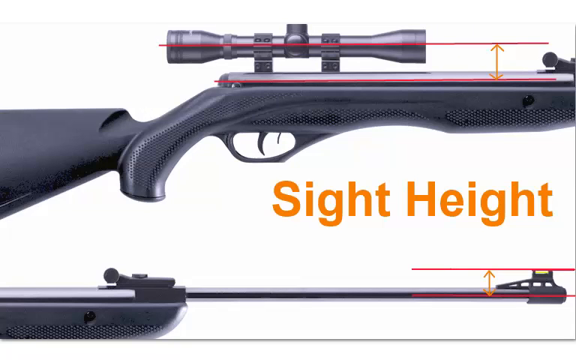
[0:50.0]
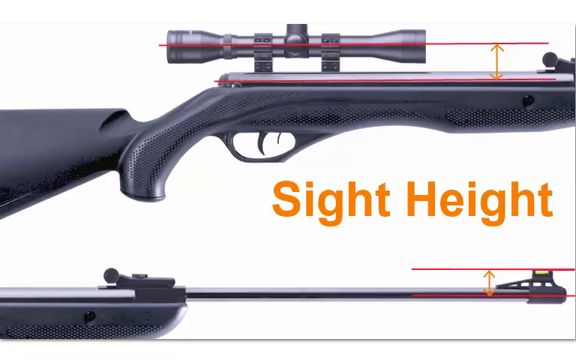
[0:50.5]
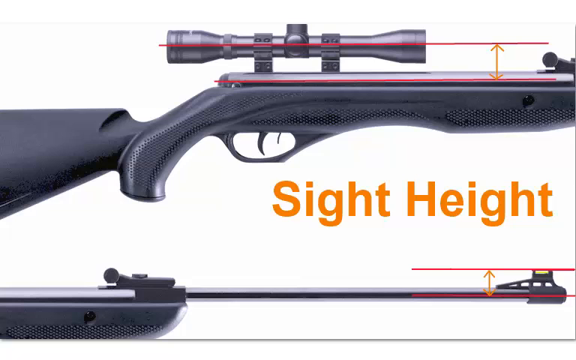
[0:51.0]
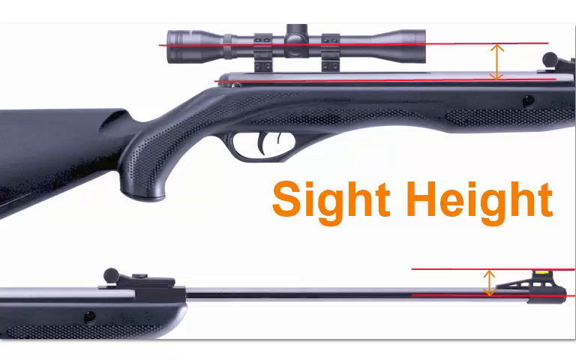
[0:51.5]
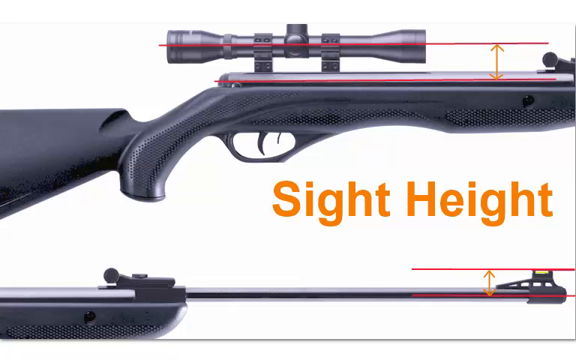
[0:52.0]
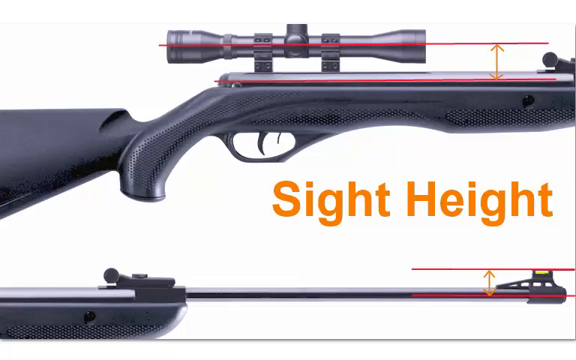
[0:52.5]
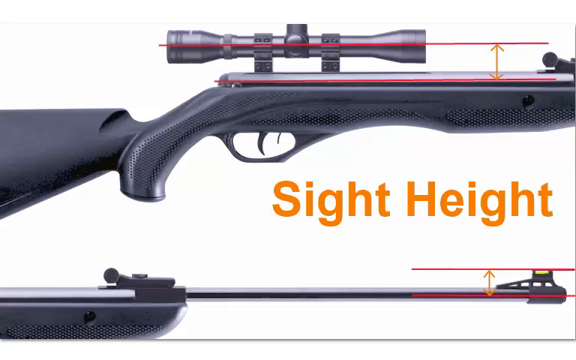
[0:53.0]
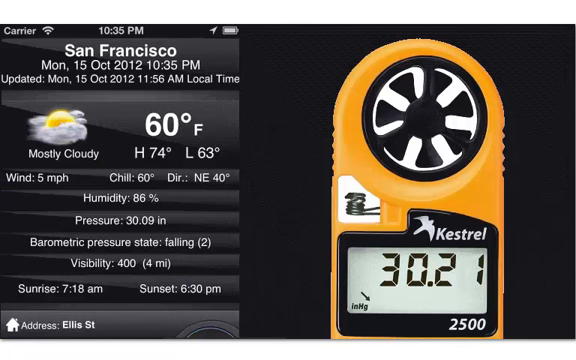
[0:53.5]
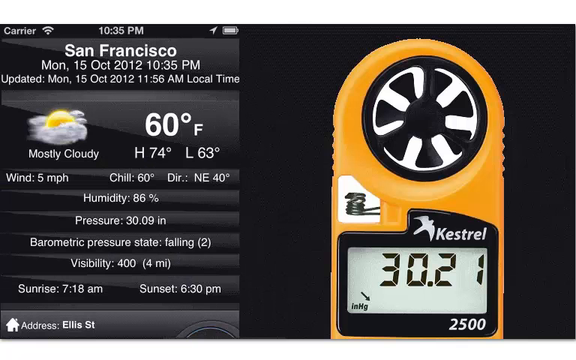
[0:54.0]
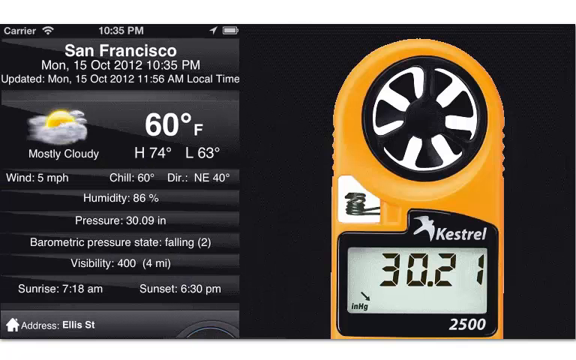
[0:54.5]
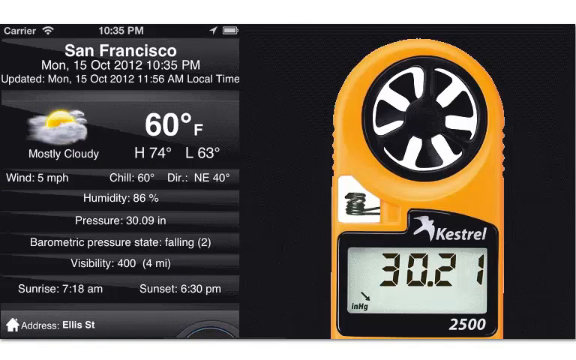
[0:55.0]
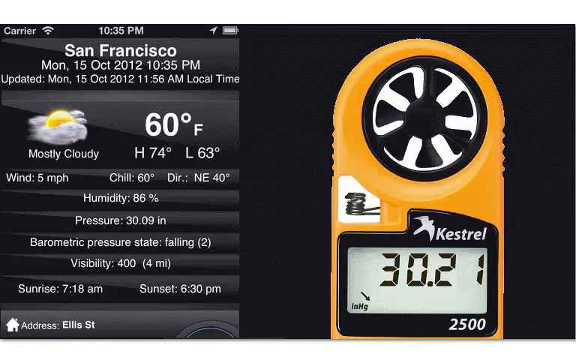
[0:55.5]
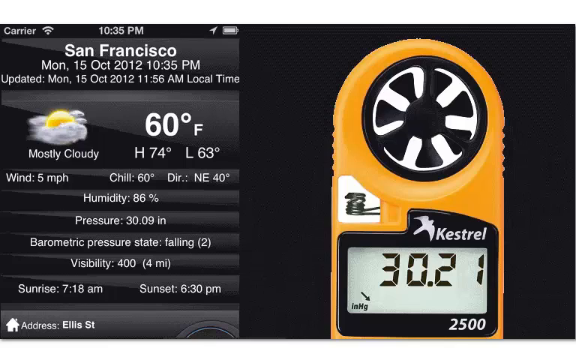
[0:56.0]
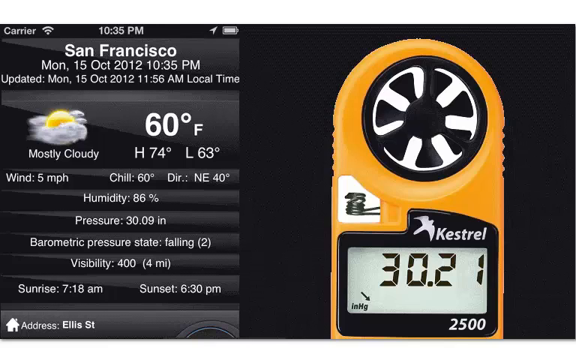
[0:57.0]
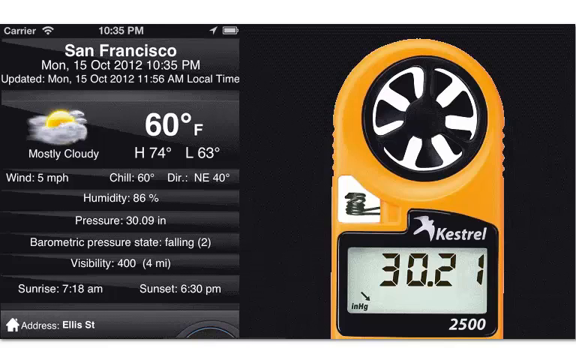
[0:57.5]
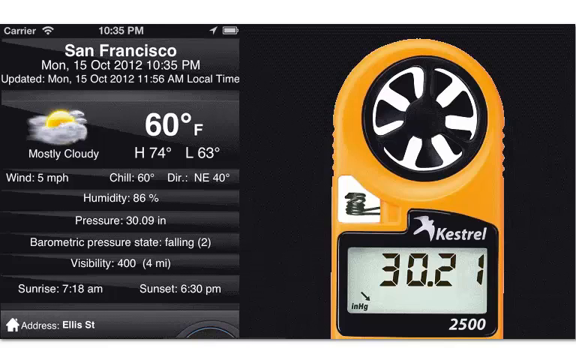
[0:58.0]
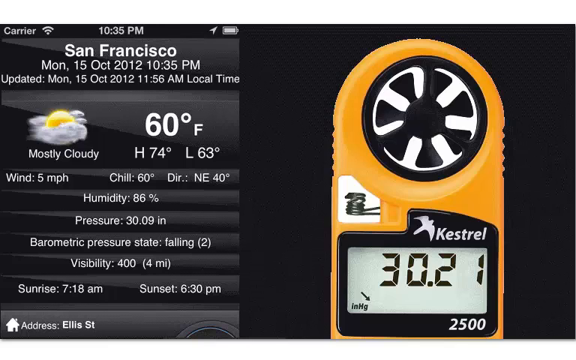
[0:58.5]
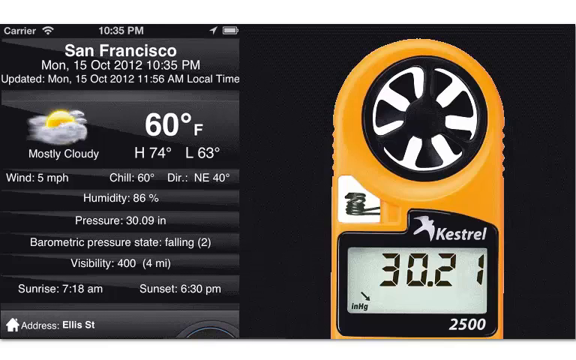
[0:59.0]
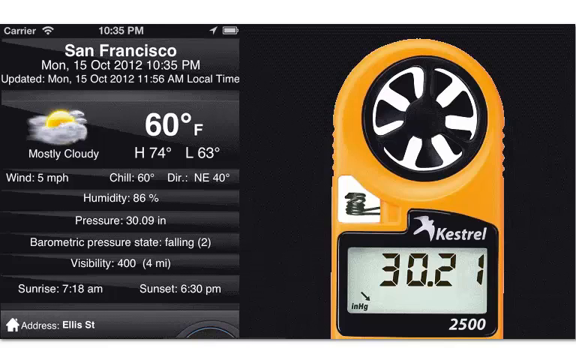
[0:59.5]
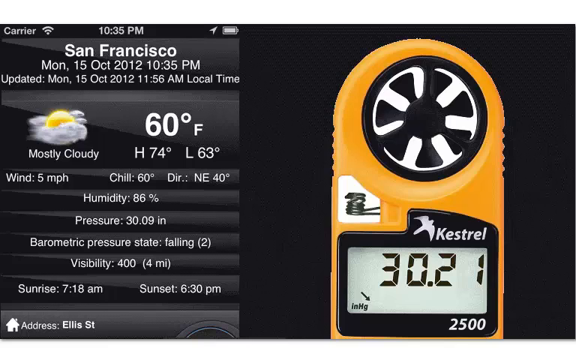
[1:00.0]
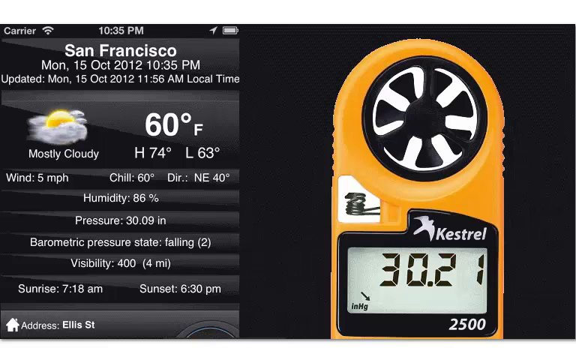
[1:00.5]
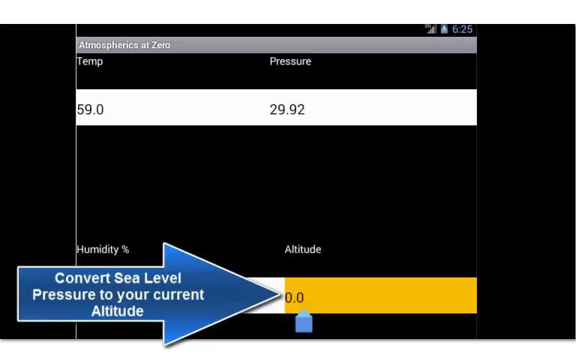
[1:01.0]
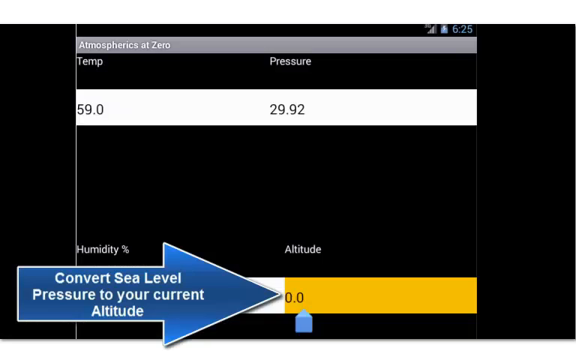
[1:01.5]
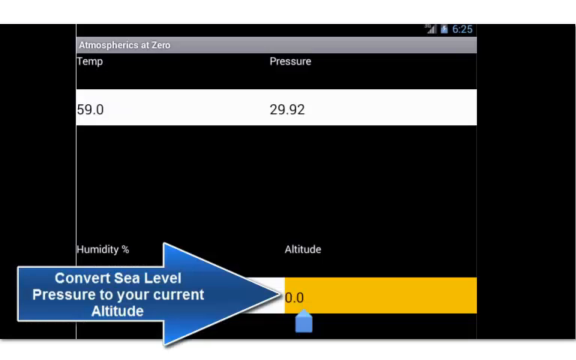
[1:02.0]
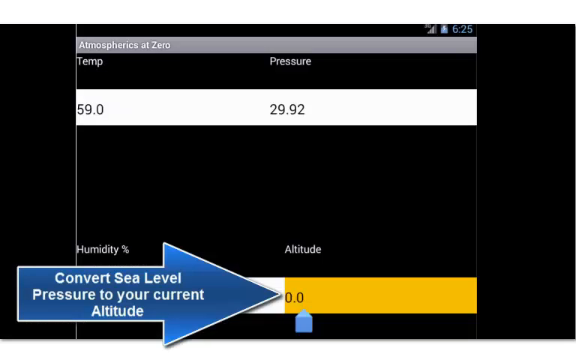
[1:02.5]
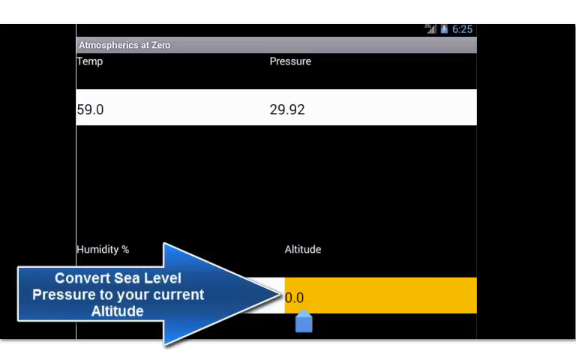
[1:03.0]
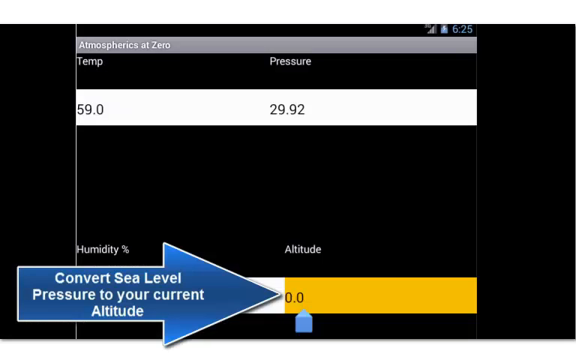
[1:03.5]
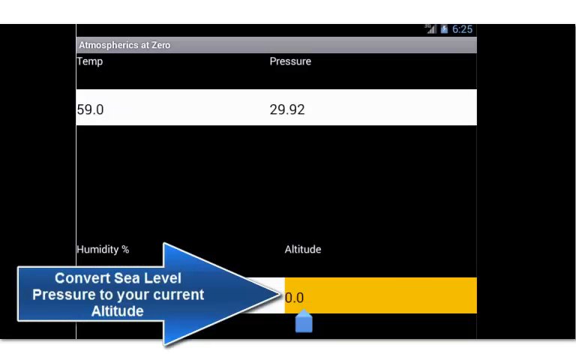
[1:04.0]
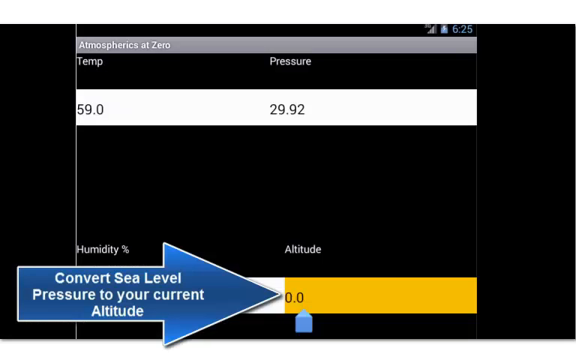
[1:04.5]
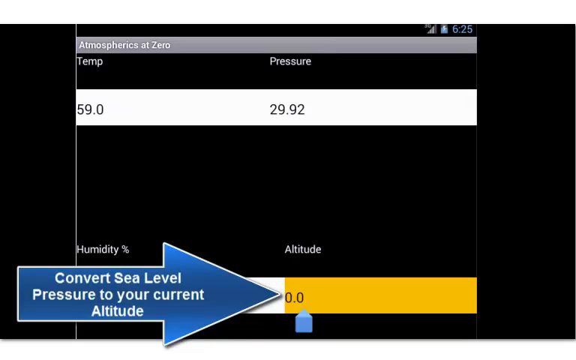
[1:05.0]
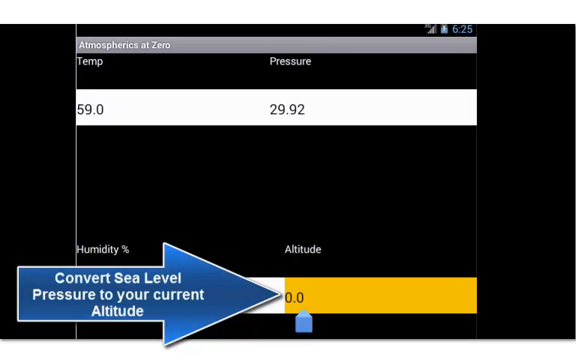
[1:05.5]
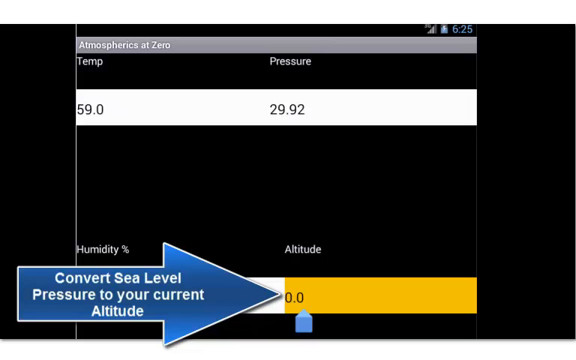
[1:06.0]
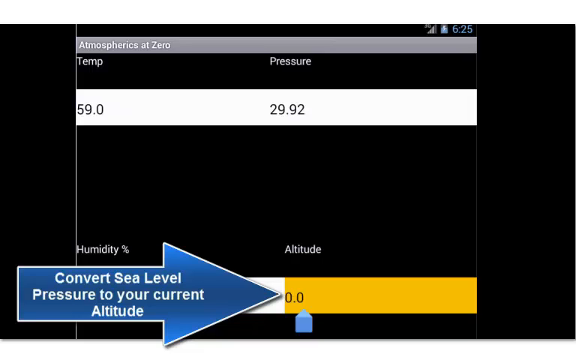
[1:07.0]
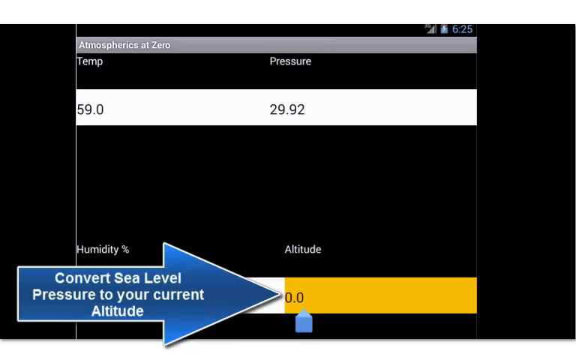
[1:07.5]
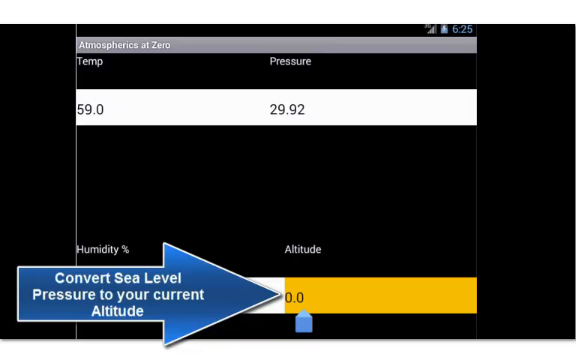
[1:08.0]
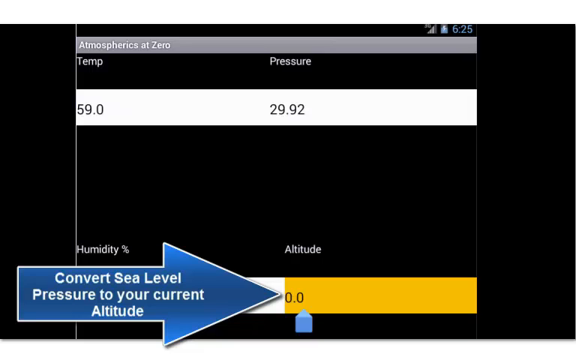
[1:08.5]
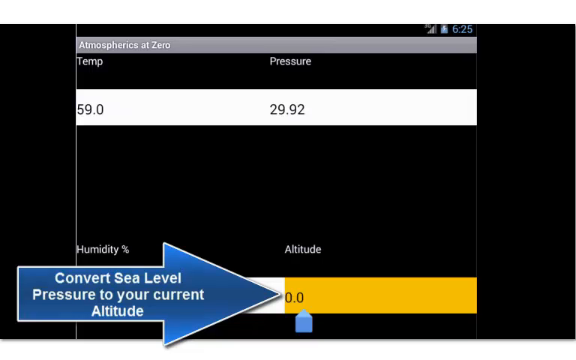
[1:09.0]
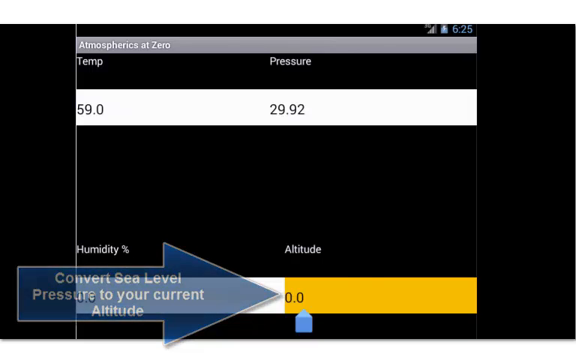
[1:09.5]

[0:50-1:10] The zoomed-in gun looks like one a sniper would use, with "sight height" in orange font underneath the trigger area. The background then turns black on the left side. An orange, unidentified item shows "KESTREL" in white, with the K capitalized and a white bird logo above it, and underneath a digital screen like a calculator's reads "30.21". To the left is what looks like a phone screenshot in white text: "carrier", "10:35 PM", and fully charged battery bars. It shows "San Francisco", a date of Monday 15 OCT 2012, and "updated" 15 OCT 2012 11:56 AM local time. It reads "mostly cloudy" with an icon of clouds covering the sun, "60°F", "H 74°" and "L 62°", along with sunrise at 7:18 AM and sunset at 6:30 PM. A blue arrow with white text reads "convert sea level pressure to your current altitude", and the current altitude reads "0.0".